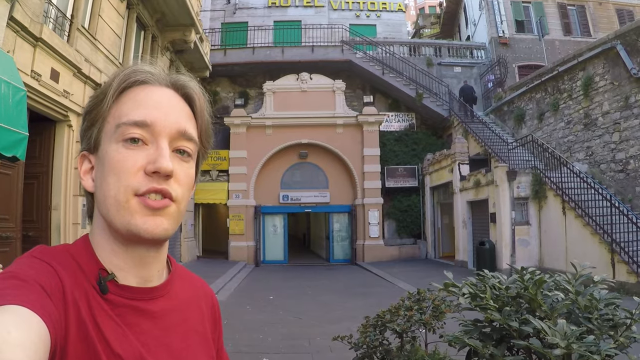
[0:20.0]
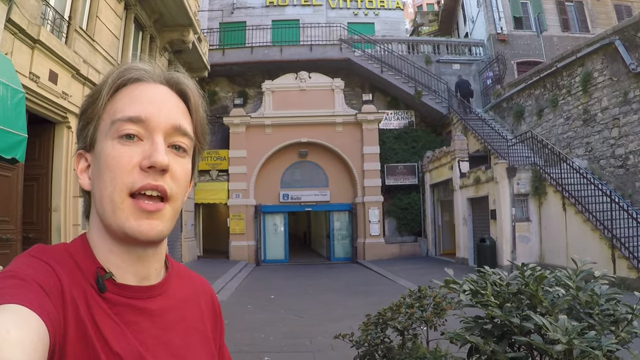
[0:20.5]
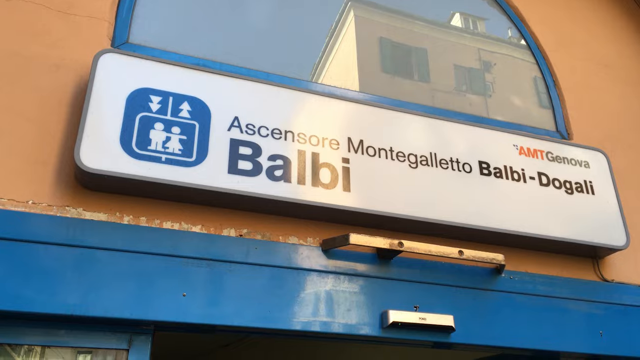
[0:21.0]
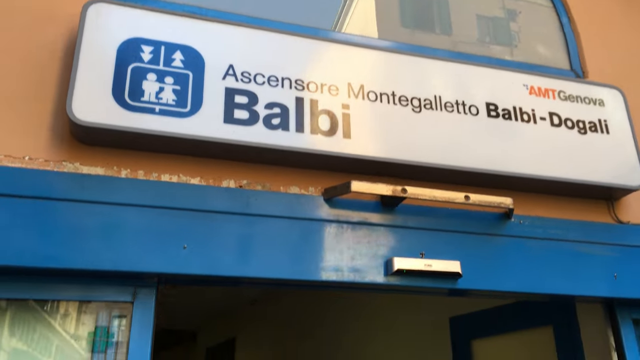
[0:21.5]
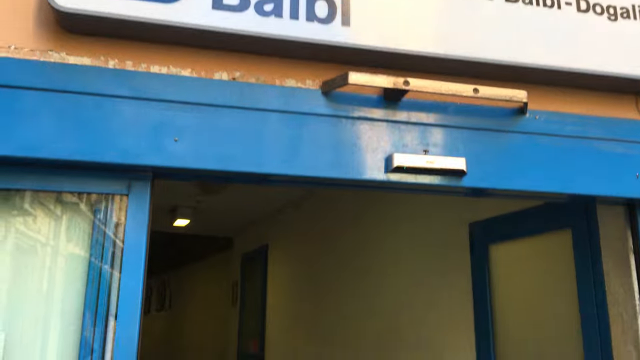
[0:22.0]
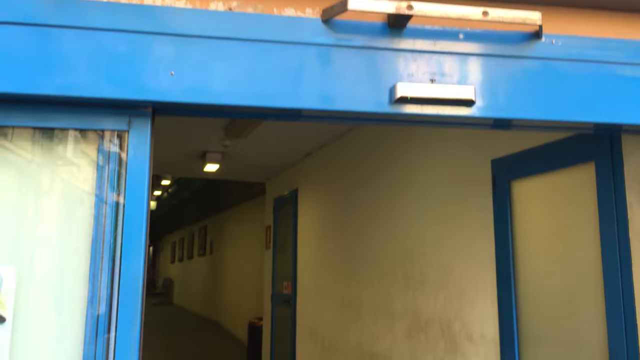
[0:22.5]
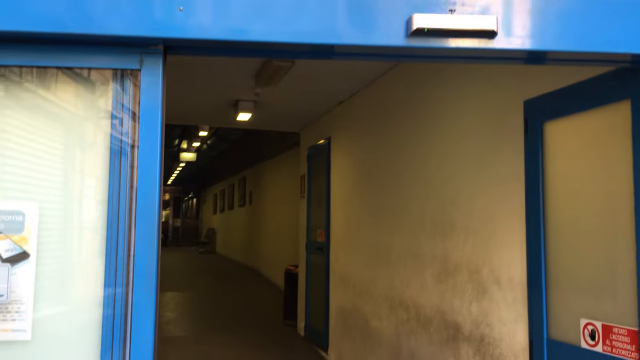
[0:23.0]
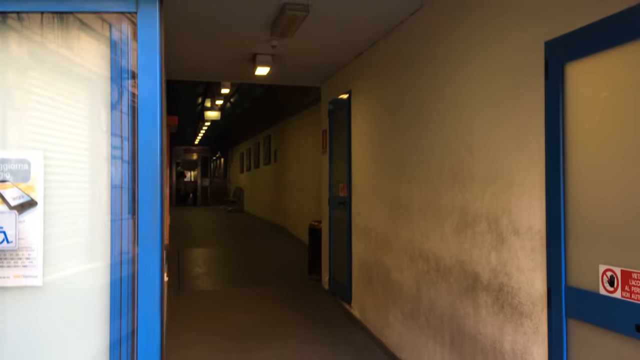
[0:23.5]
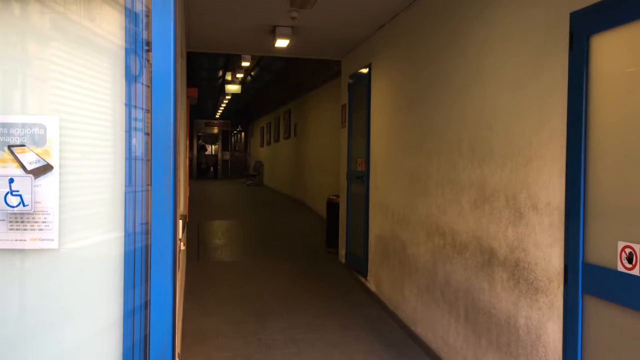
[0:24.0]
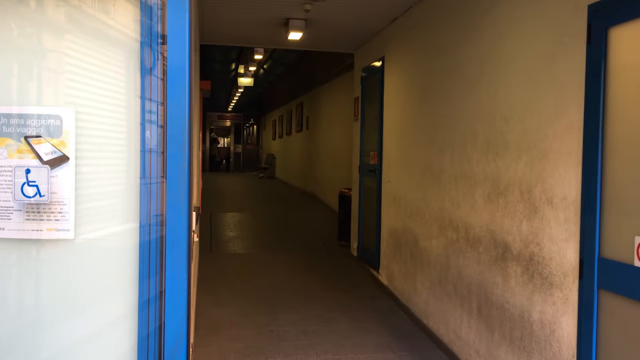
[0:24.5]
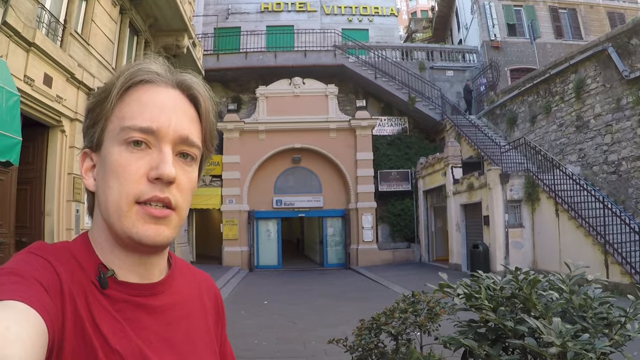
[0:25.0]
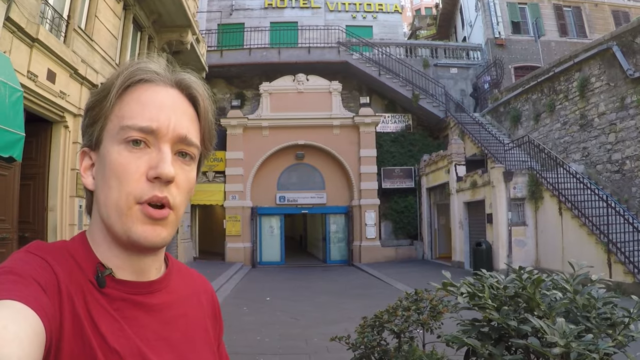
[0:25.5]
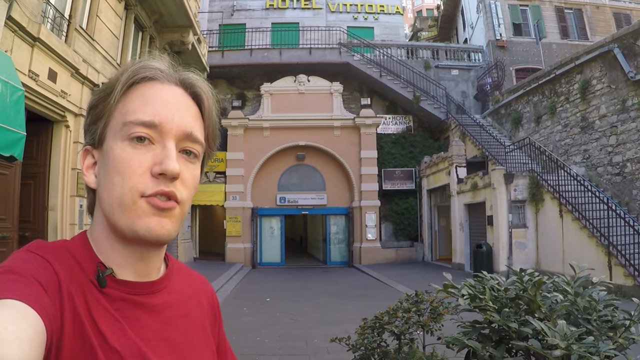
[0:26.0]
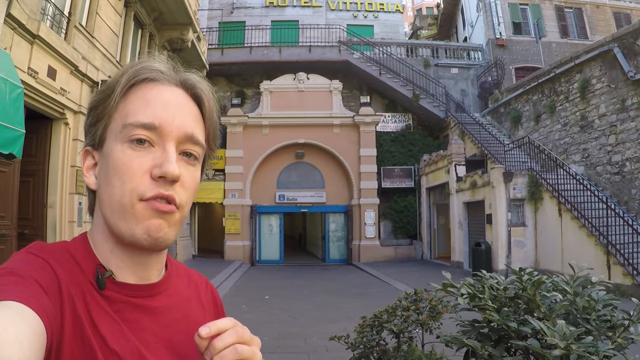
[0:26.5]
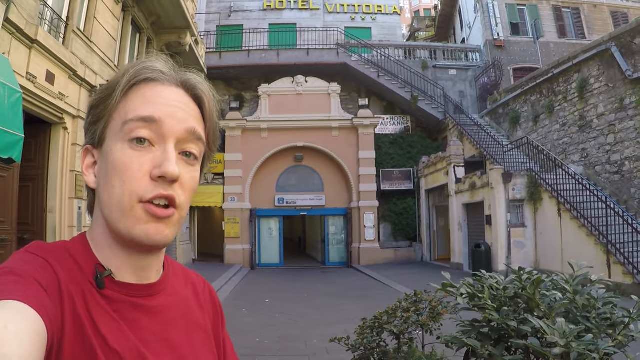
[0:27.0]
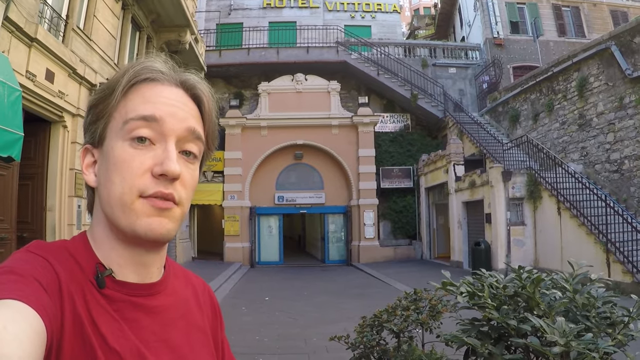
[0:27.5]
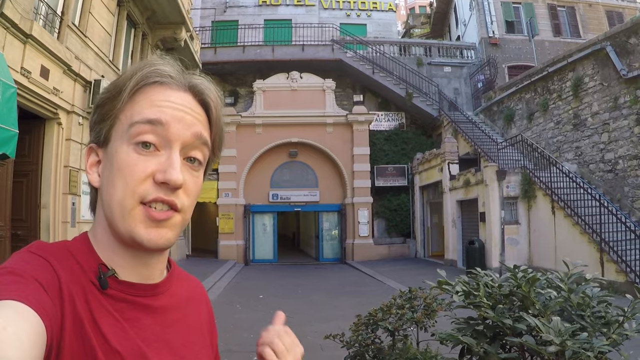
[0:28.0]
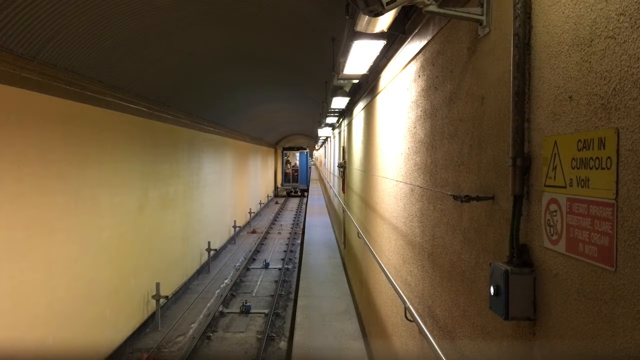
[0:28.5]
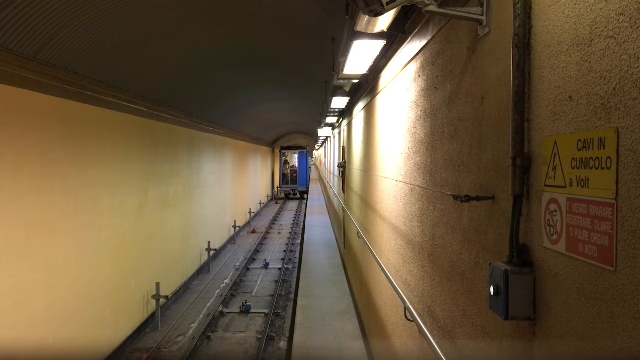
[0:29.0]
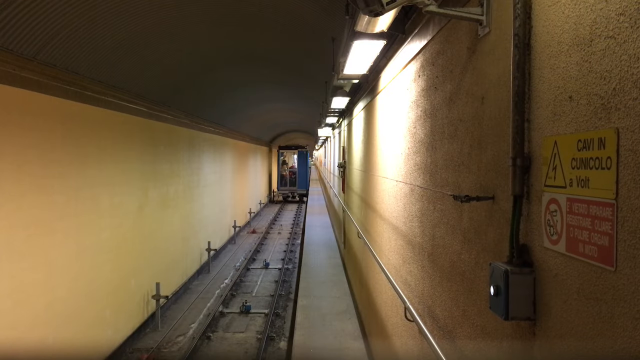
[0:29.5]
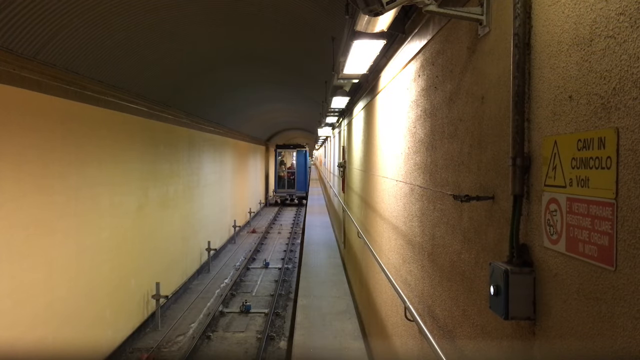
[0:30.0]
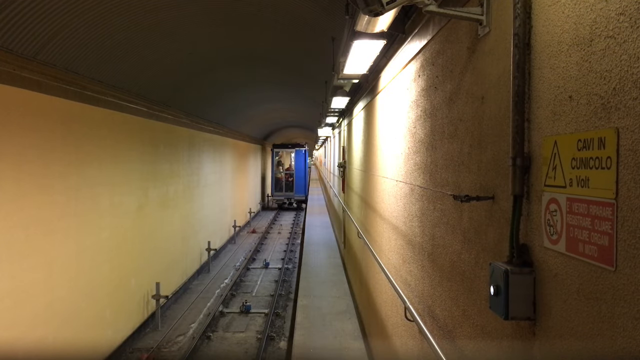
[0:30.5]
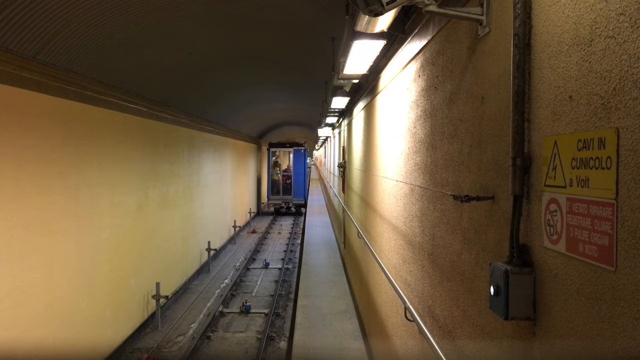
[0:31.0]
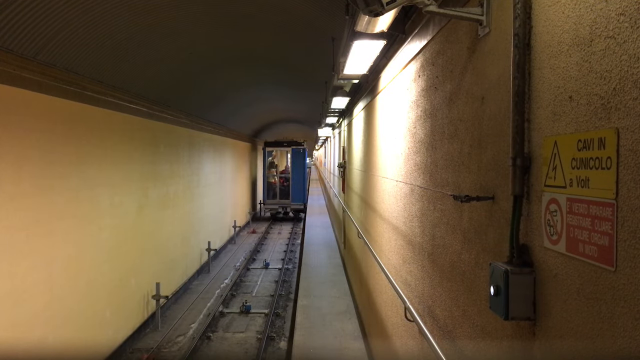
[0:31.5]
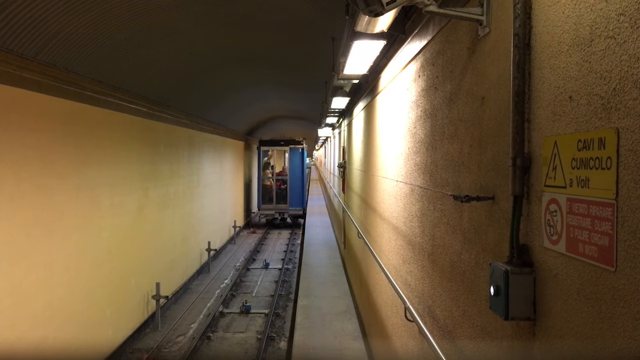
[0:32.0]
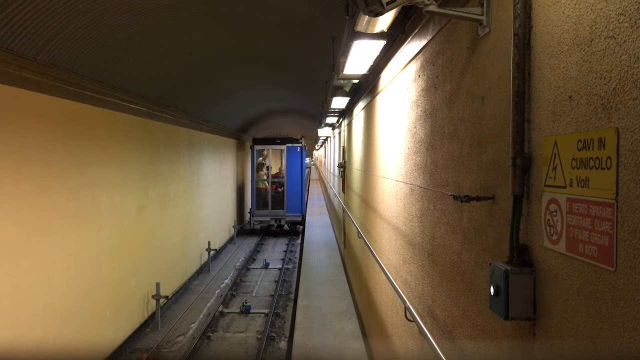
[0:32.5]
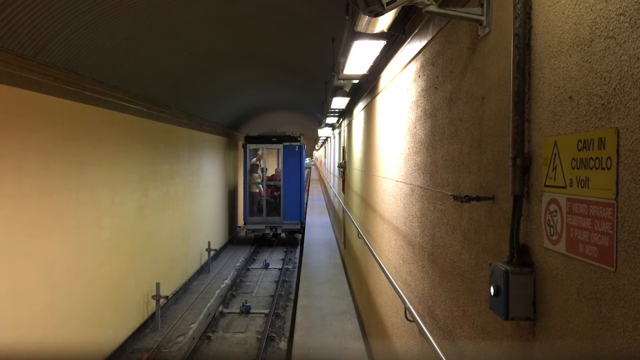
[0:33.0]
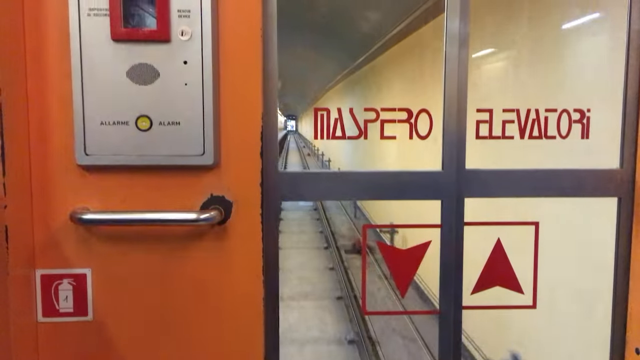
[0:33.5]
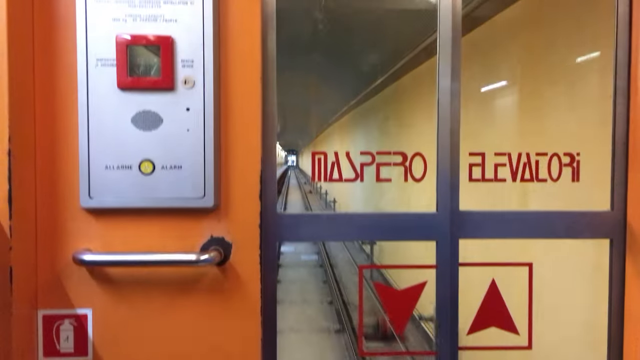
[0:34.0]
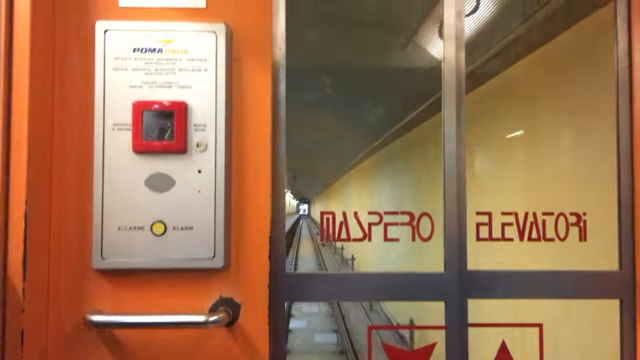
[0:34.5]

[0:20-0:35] The man in the red shirt talks to the camera selfie style. Behind him is an entryway with blue doors that have an opening where, apparently, people or a machine would go through. There are Italian words on it in blue, the noticeable one being "BALBI" in blue letters. Inside is a hallway with white walls. After another shot of the man in the red shirt, an elevator or machine goes down the tunnel: a blue box, apparently an elevator that travels straight. There is a track inside it, signs such as danger and watch out, and controls on the window. It is daytime, and not many people are around, with one or two in the back.